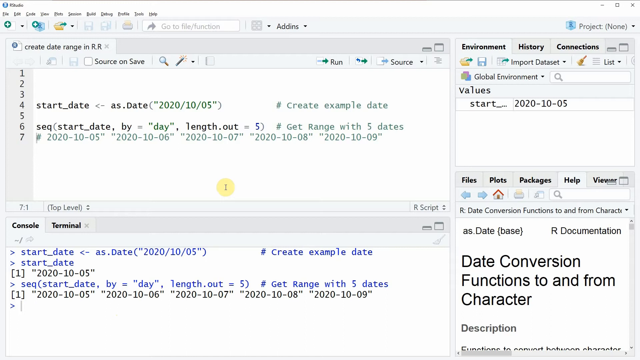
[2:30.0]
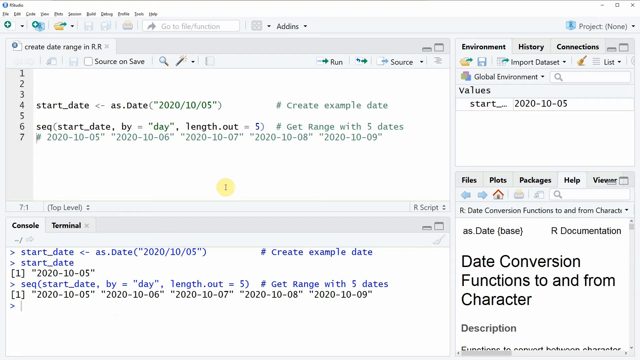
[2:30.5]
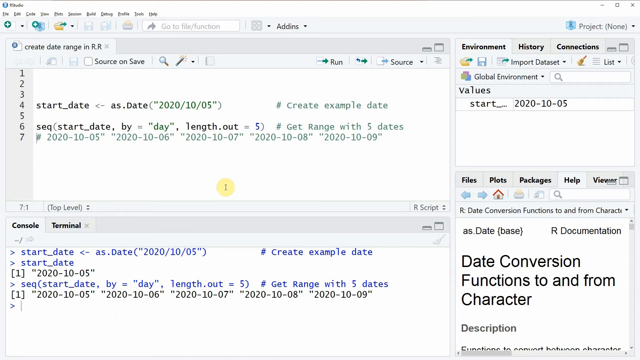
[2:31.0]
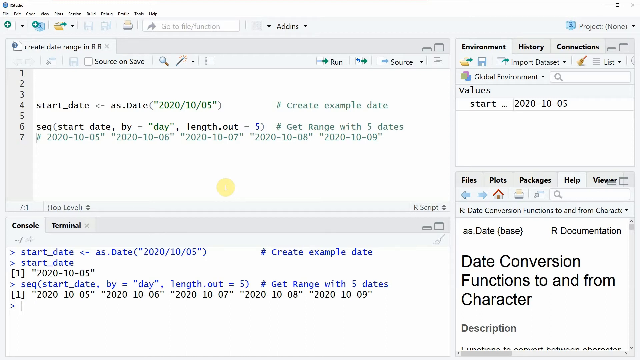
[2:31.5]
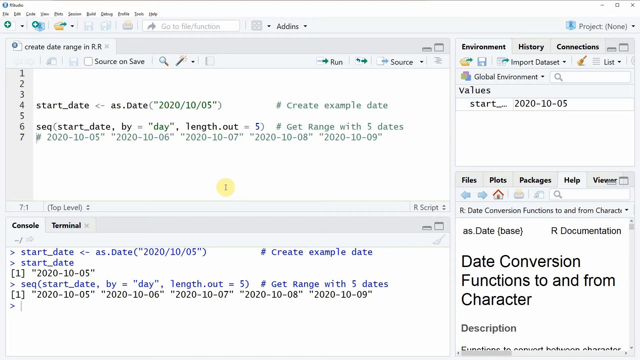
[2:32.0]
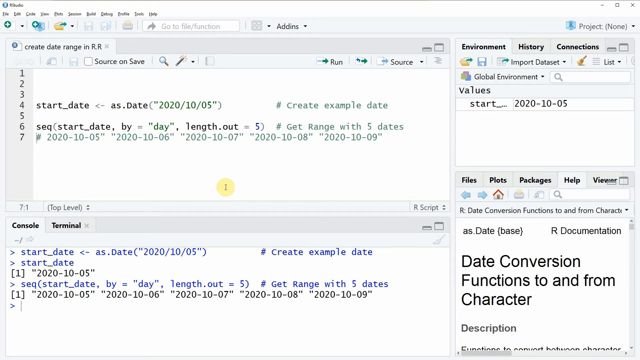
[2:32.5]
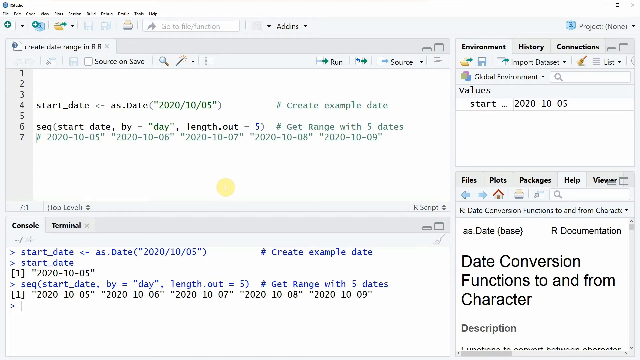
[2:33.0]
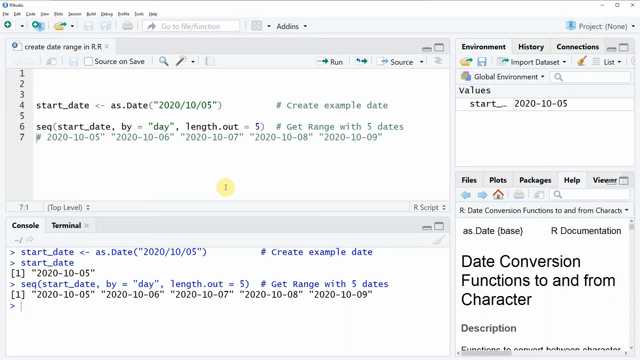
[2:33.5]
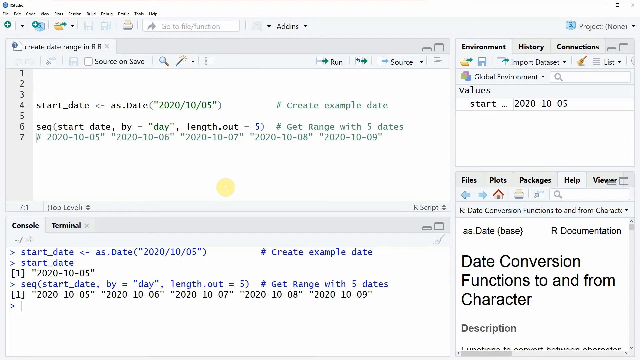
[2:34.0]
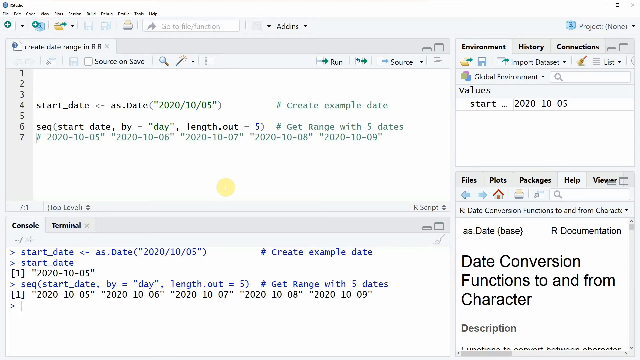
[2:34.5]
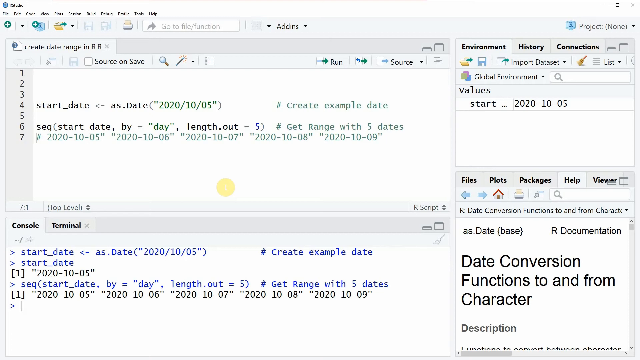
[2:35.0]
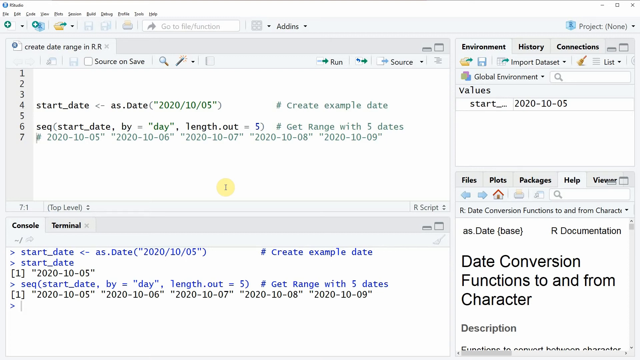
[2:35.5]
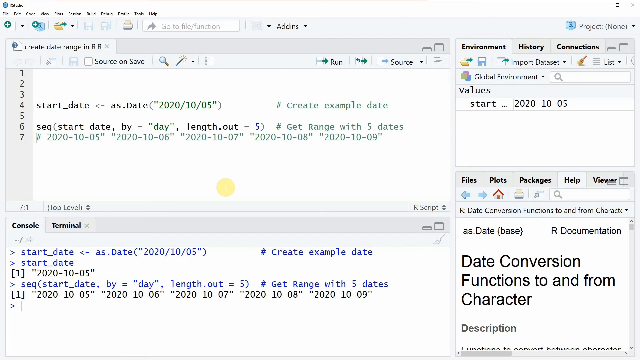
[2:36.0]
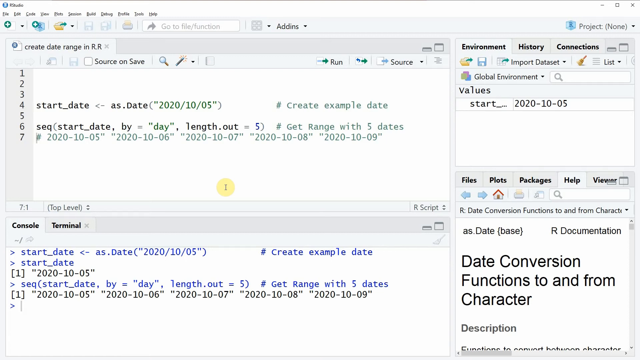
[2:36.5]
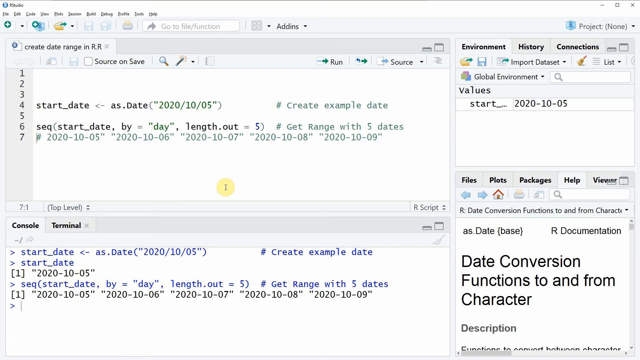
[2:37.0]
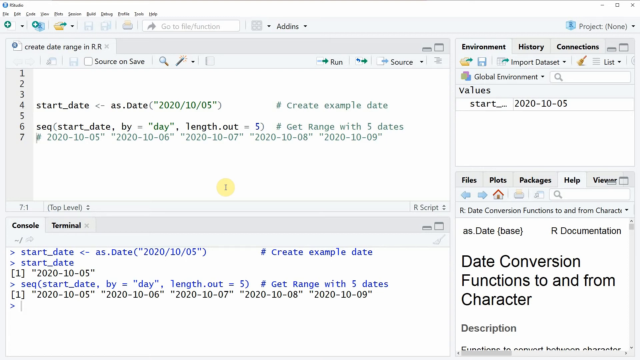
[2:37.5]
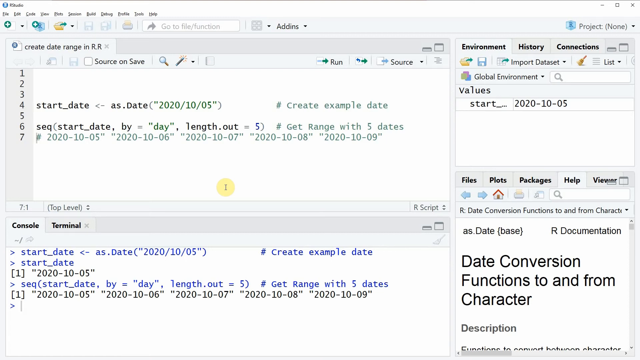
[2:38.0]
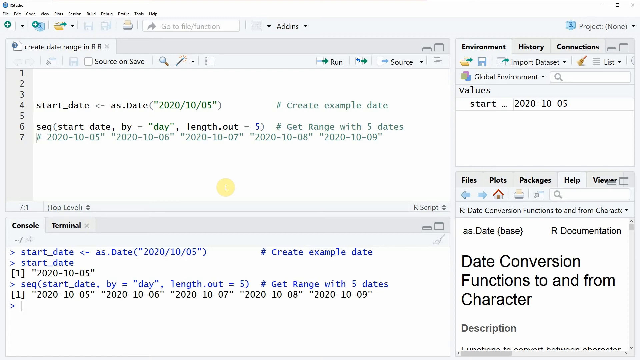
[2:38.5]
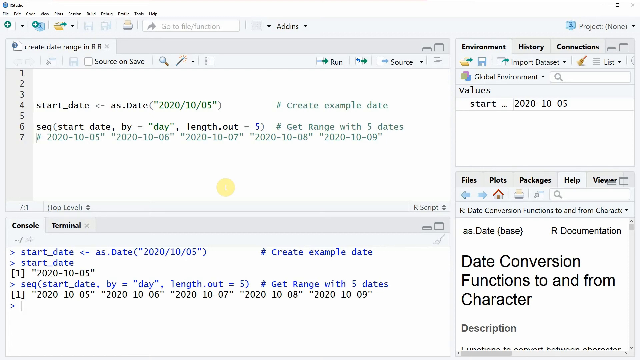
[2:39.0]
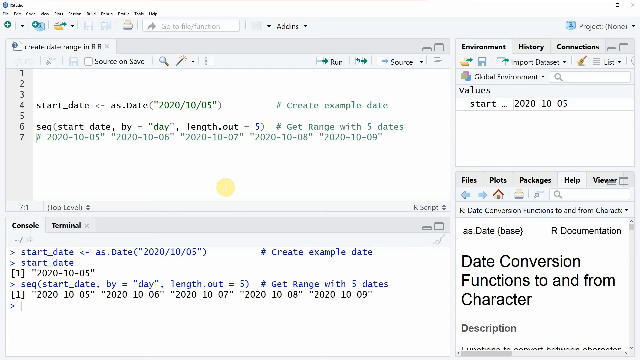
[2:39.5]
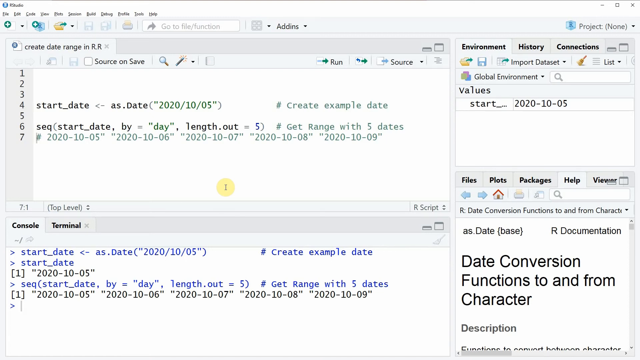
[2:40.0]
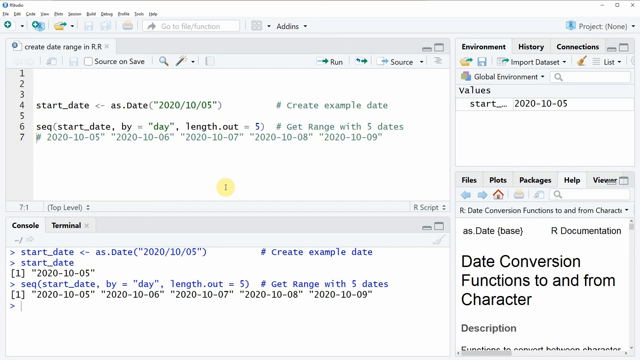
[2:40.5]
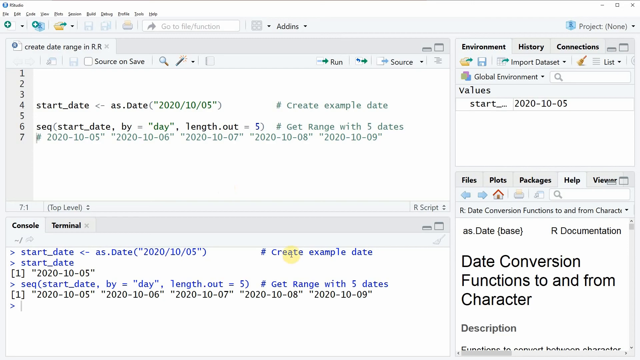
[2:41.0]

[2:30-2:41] Code is ordered in sections with hashtags in front of sentences, all on the left-hand side of the screen. The right-hand side has text about conversion functions and character.